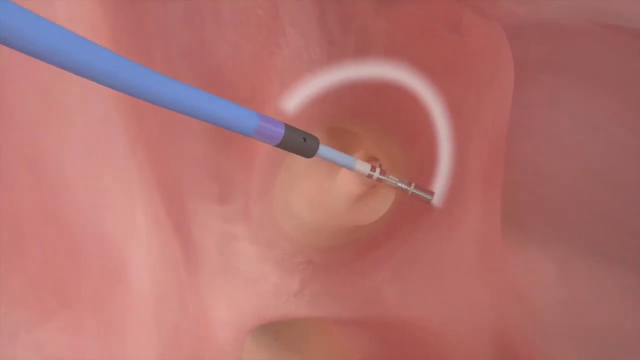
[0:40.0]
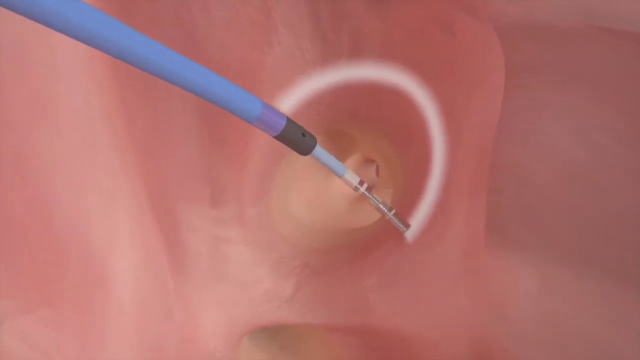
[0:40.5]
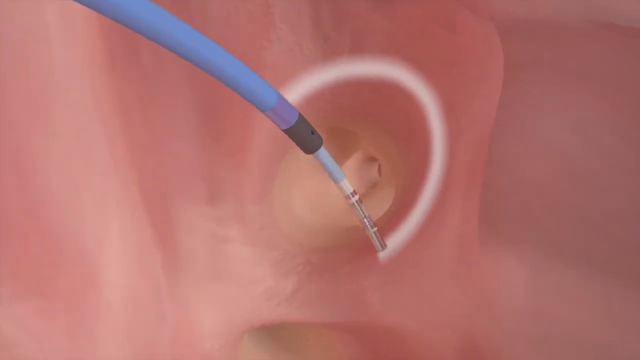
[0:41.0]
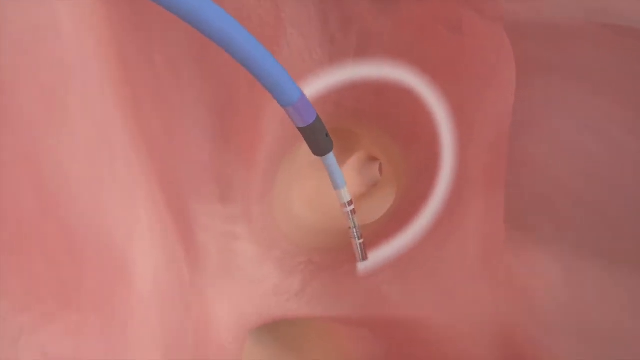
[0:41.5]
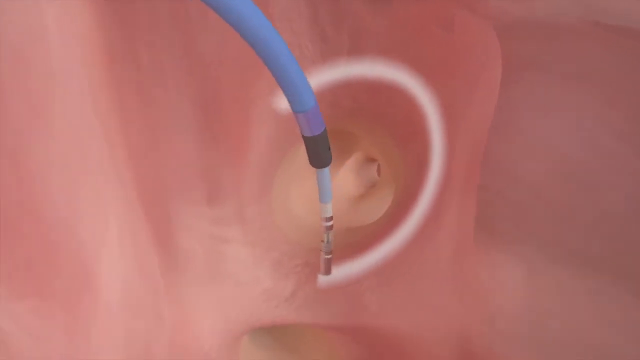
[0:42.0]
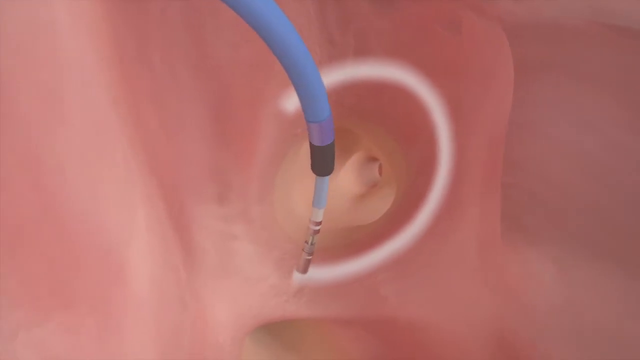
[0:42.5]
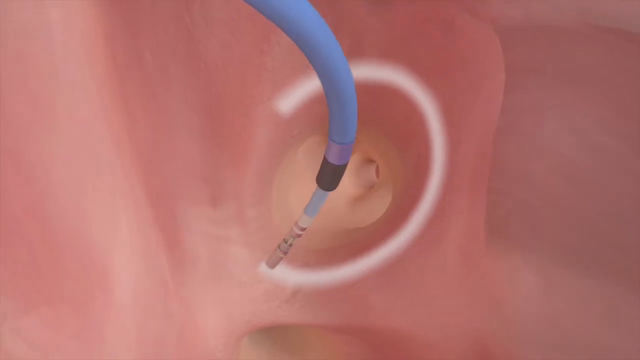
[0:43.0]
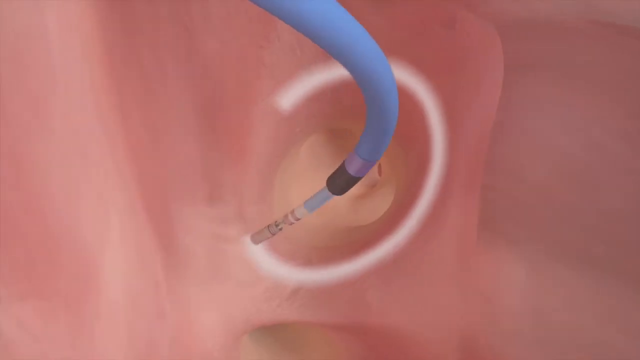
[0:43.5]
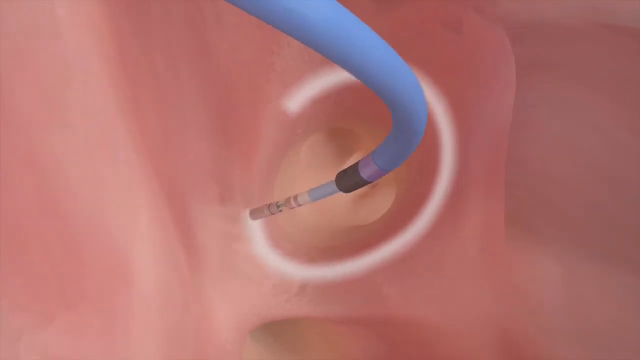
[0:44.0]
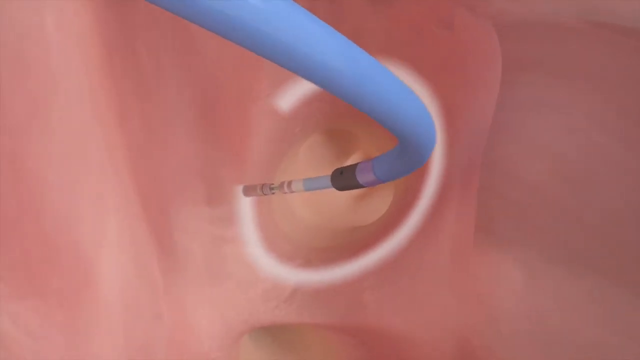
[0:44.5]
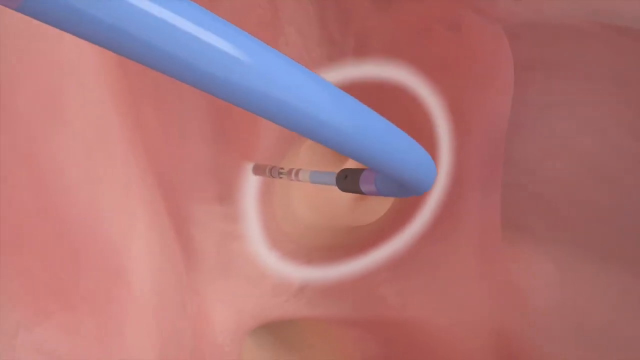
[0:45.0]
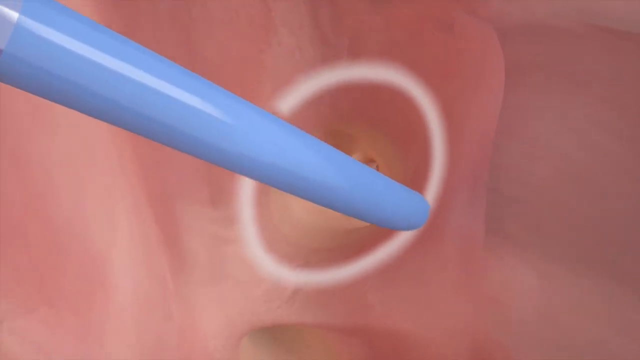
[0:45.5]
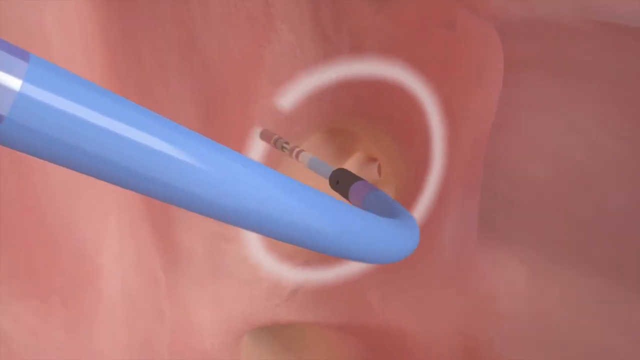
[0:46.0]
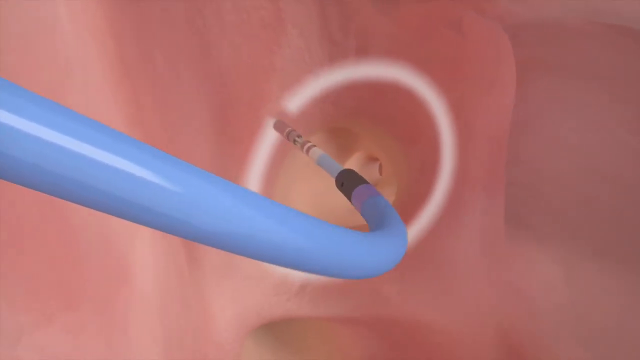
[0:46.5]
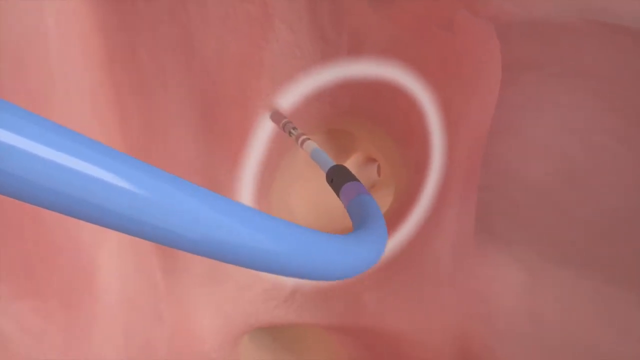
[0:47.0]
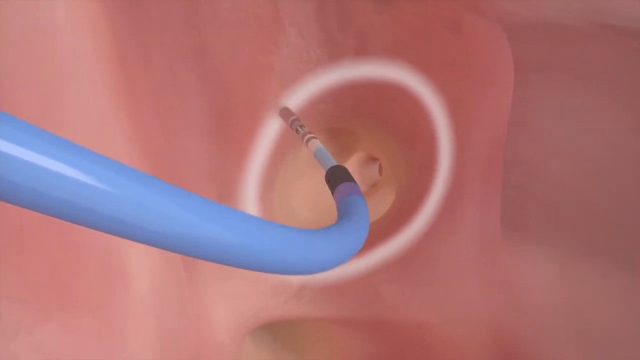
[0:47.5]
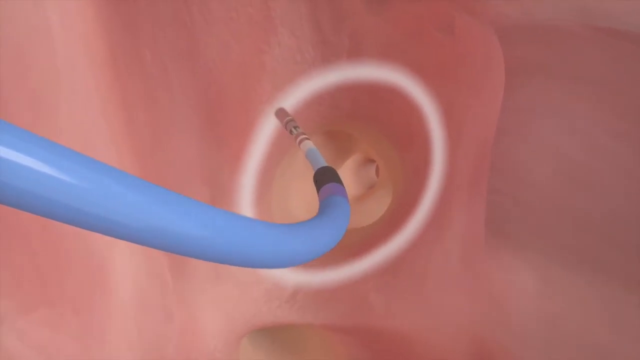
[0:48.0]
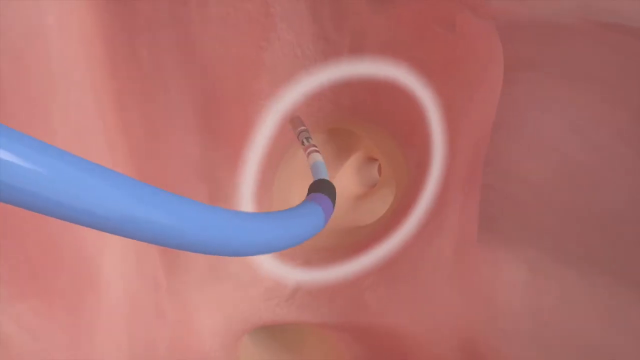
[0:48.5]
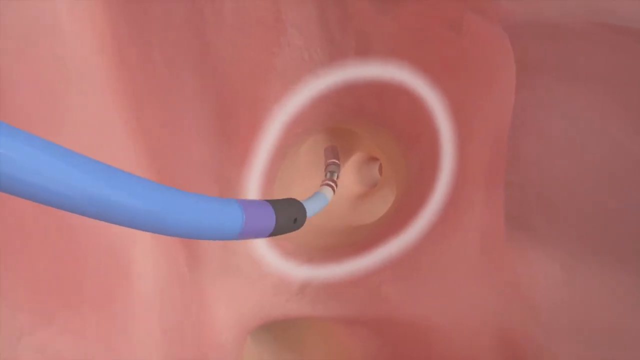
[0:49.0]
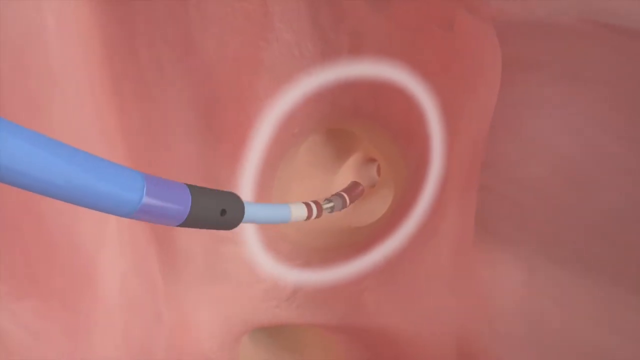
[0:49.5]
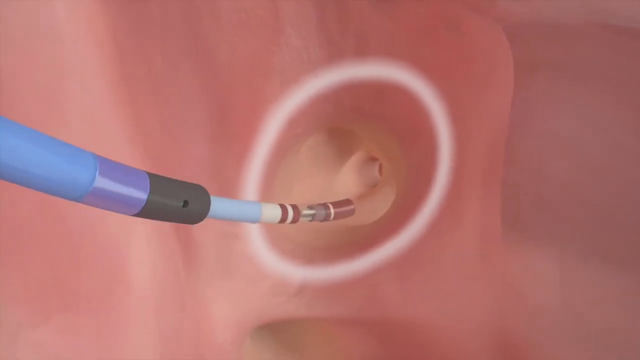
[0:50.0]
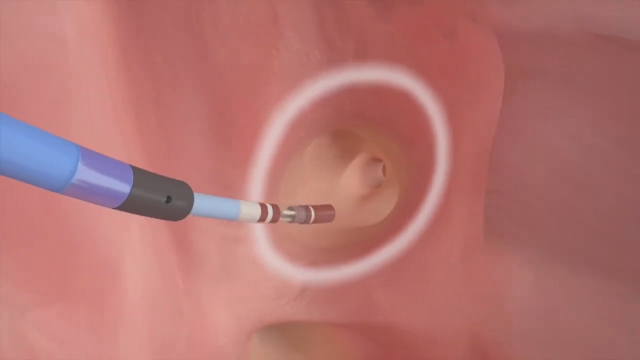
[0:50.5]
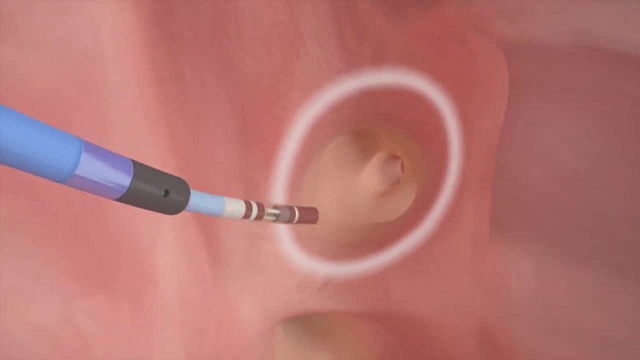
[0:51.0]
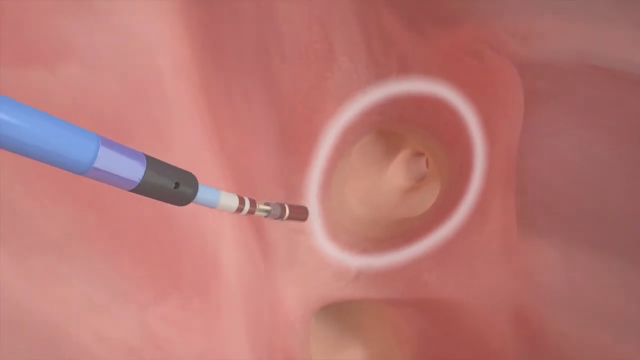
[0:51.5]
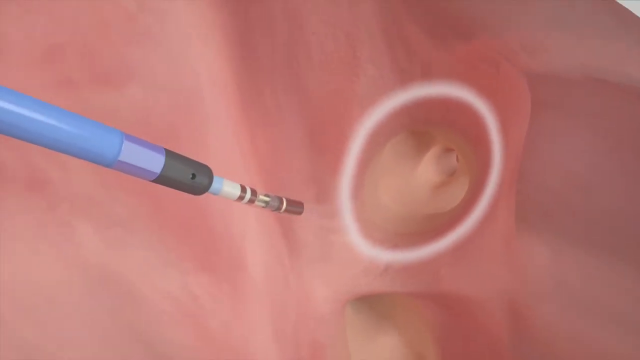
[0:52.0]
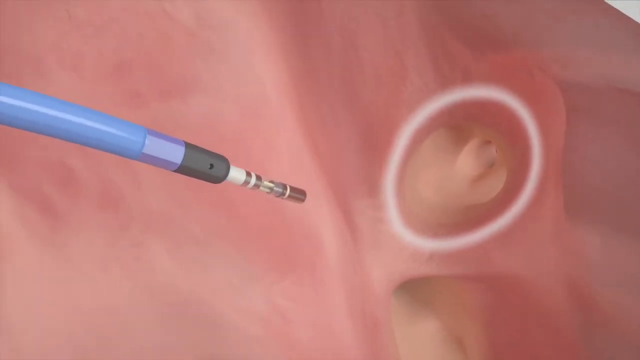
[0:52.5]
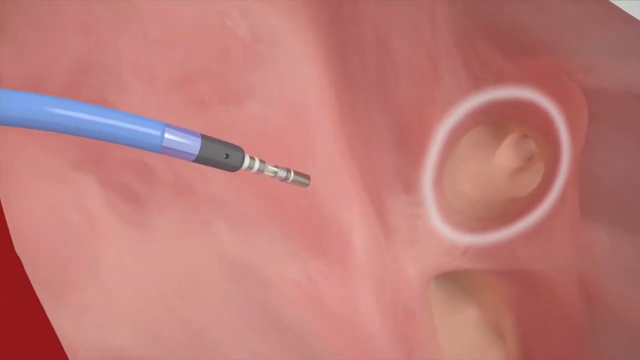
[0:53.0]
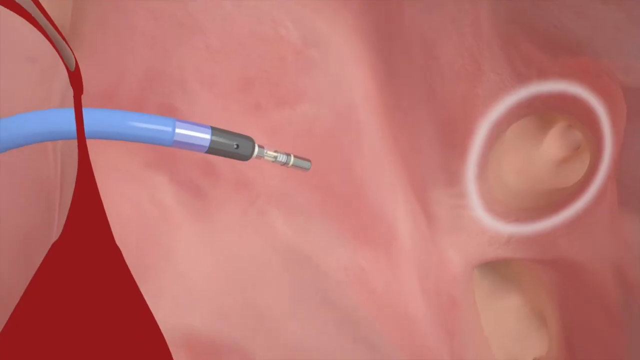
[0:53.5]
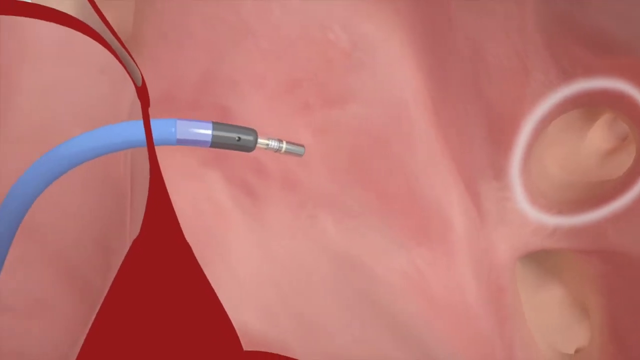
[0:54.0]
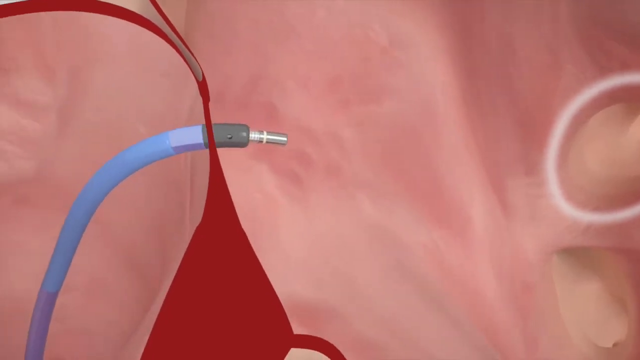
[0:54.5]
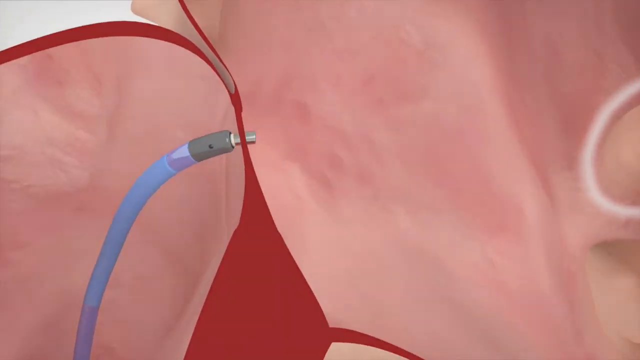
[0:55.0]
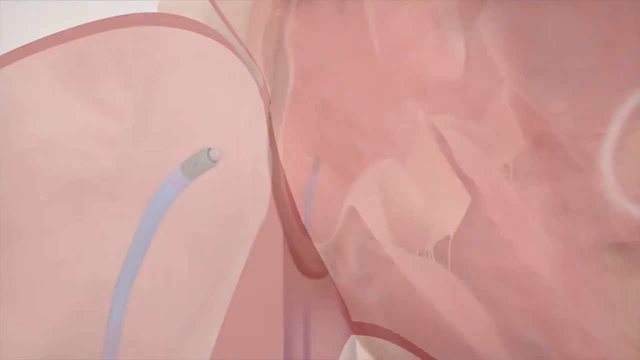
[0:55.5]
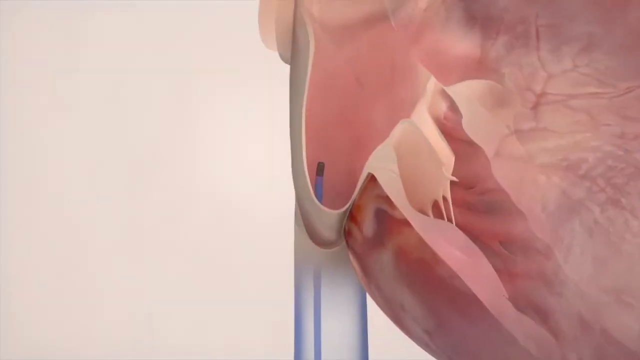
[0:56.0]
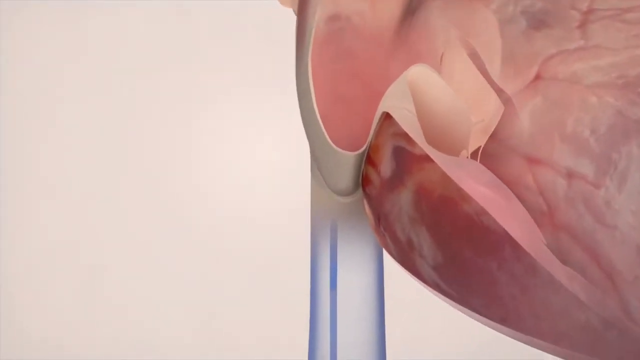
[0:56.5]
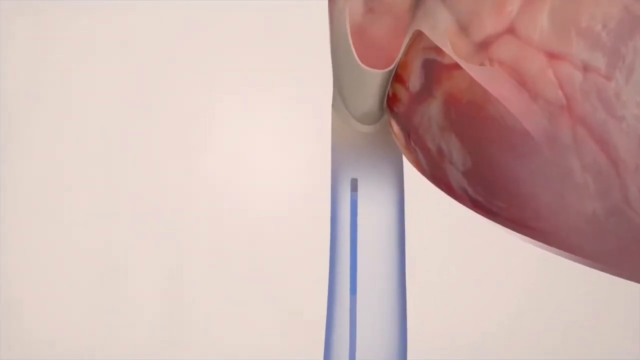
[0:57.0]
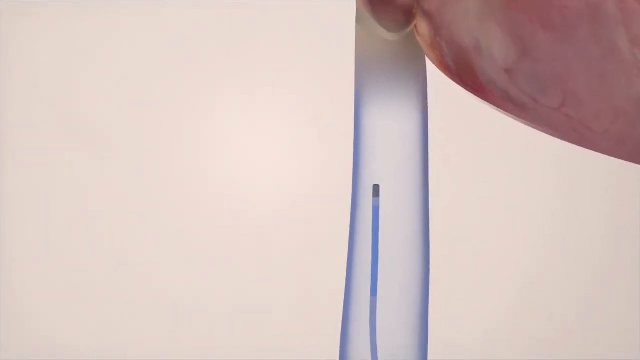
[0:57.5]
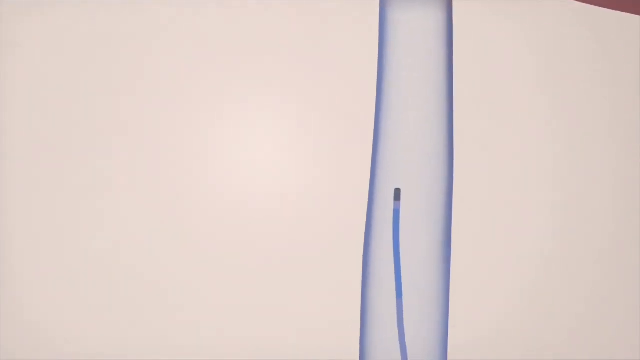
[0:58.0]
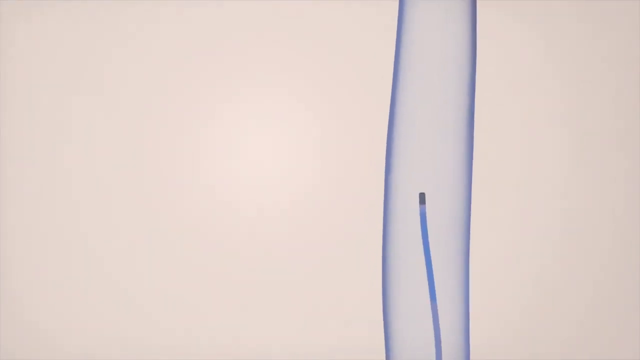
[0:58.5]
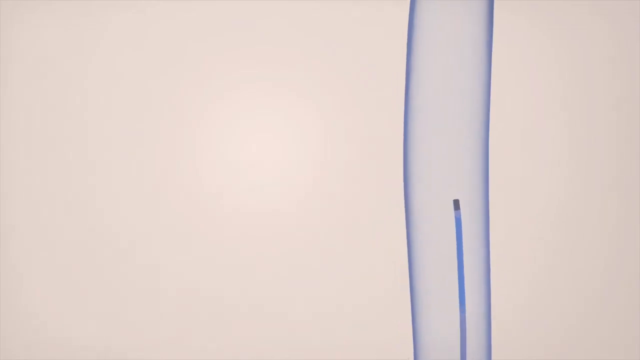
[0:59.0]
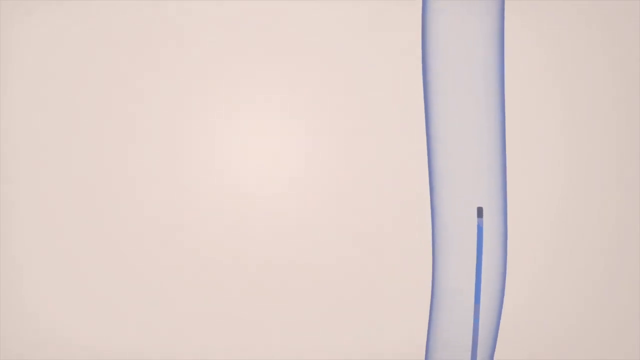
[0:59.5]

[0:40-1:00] The wire is putting something, seemingly a light, on the wall of the heart. After that, the vein takes off from its place at the heart.